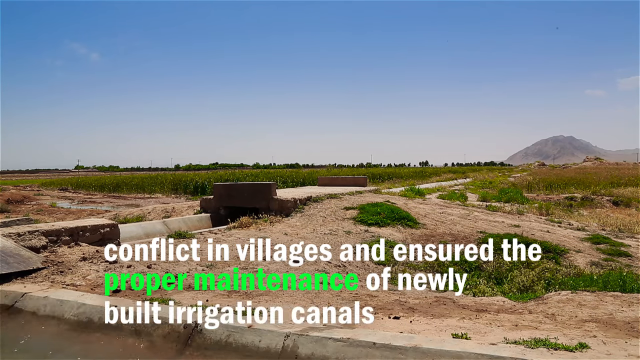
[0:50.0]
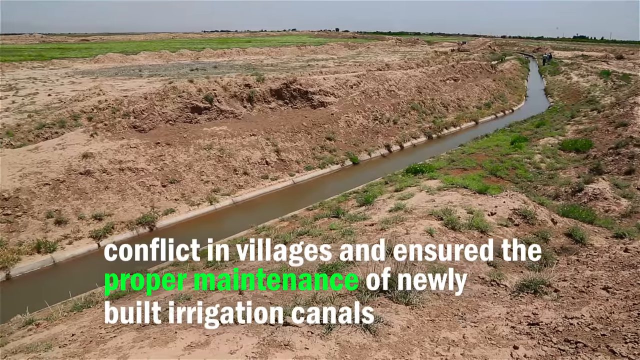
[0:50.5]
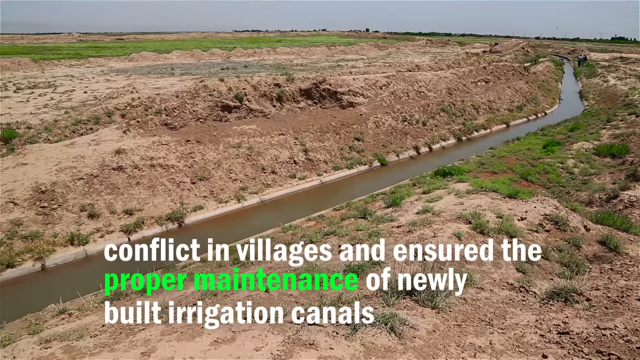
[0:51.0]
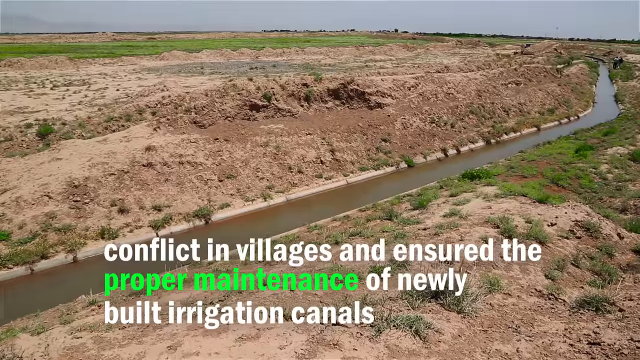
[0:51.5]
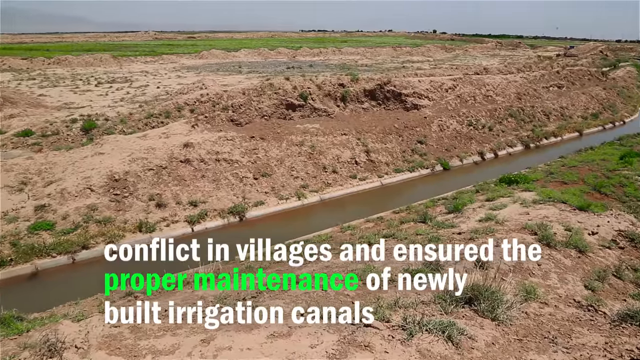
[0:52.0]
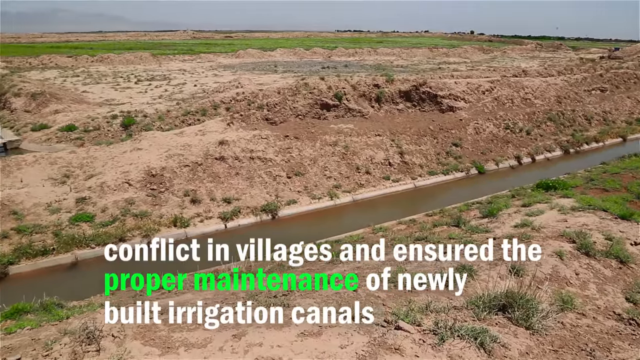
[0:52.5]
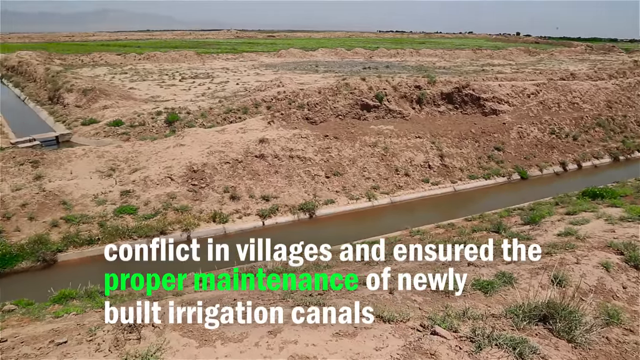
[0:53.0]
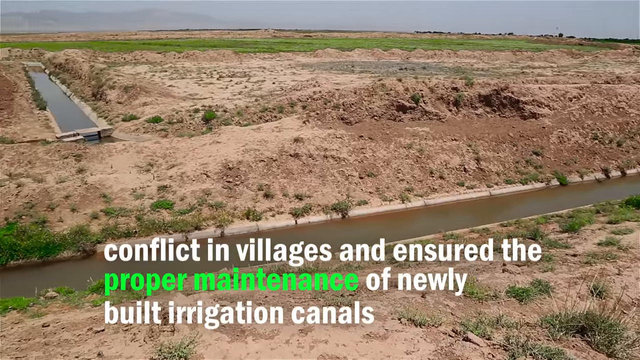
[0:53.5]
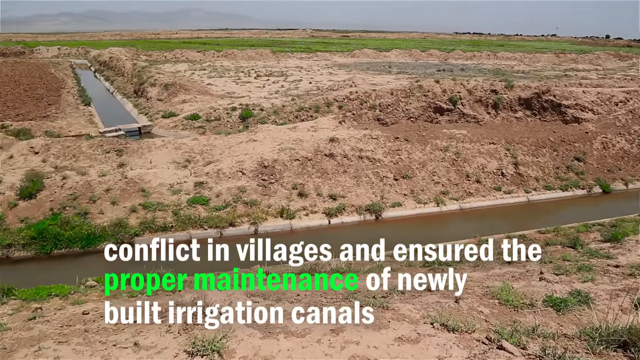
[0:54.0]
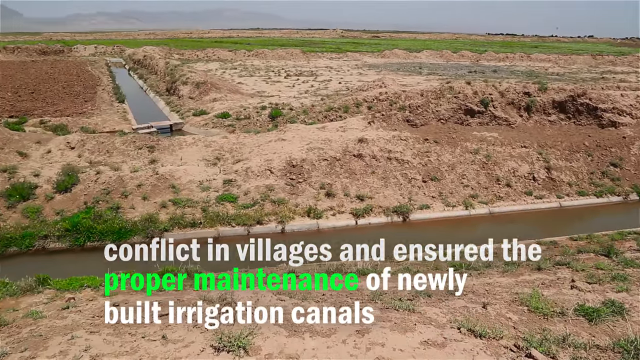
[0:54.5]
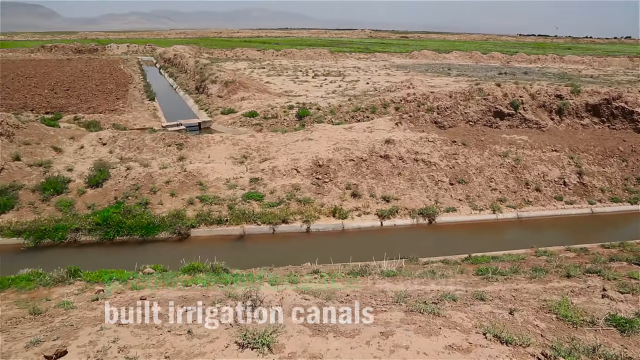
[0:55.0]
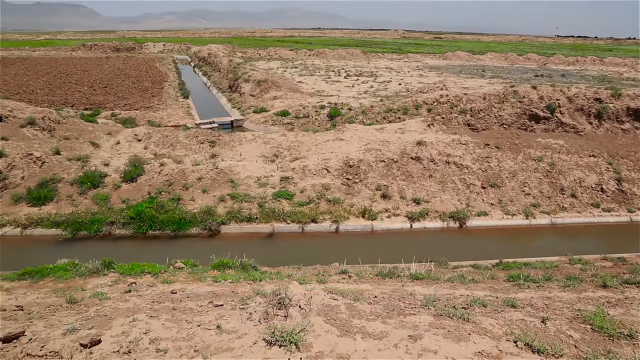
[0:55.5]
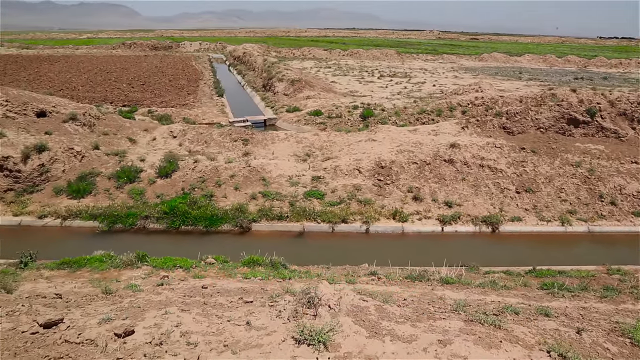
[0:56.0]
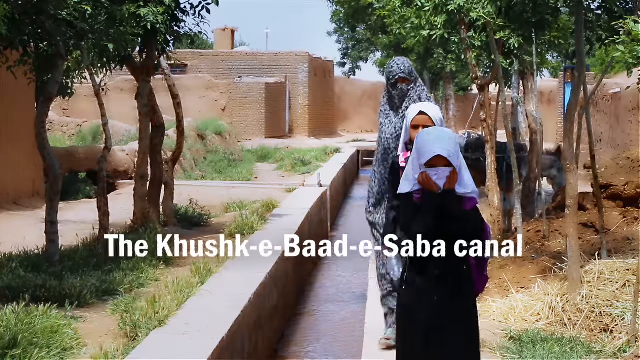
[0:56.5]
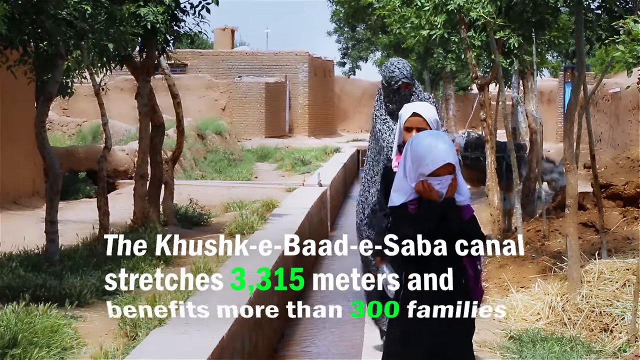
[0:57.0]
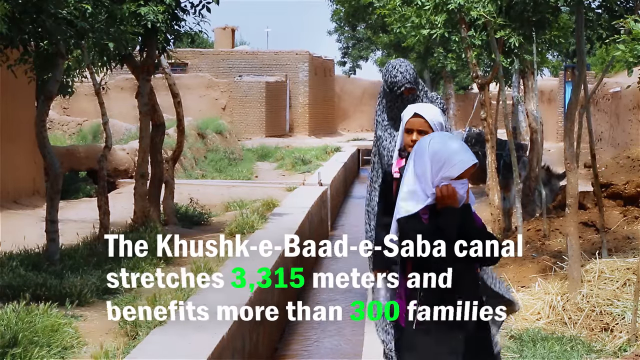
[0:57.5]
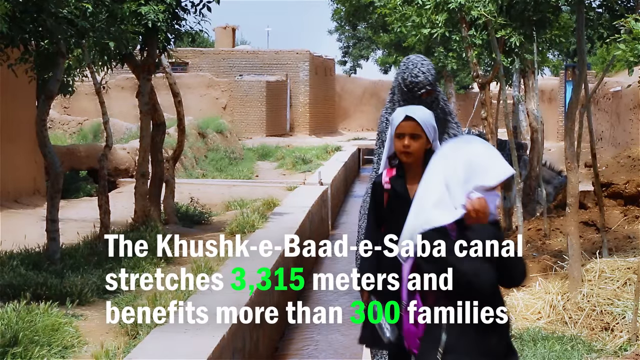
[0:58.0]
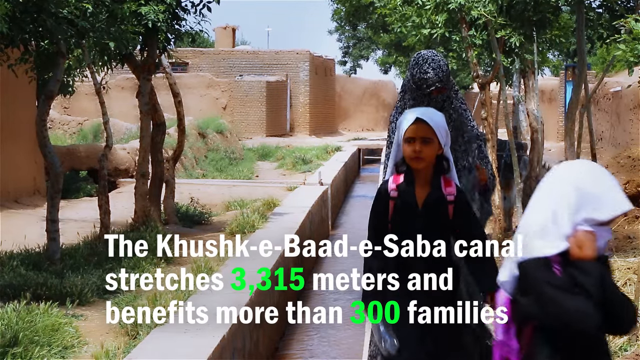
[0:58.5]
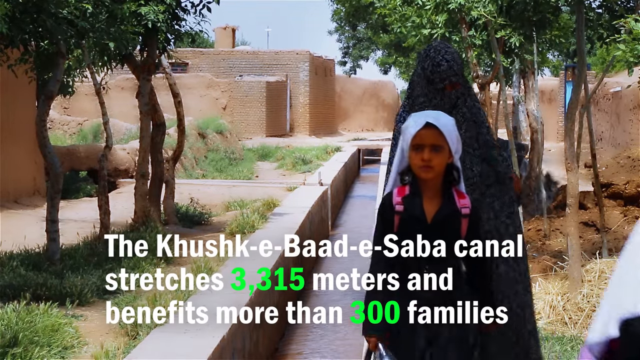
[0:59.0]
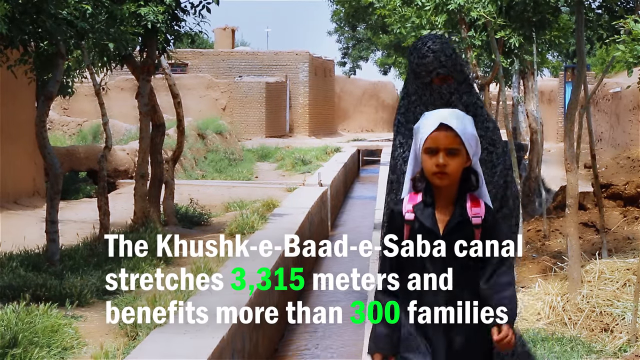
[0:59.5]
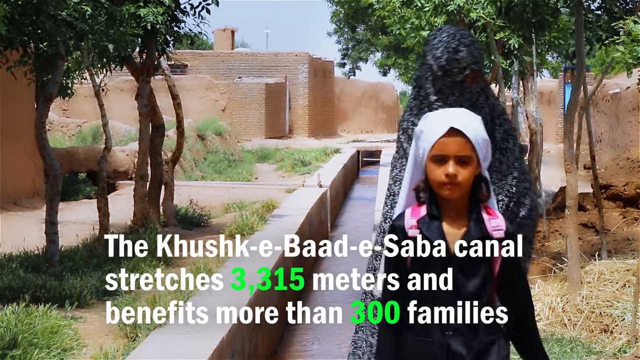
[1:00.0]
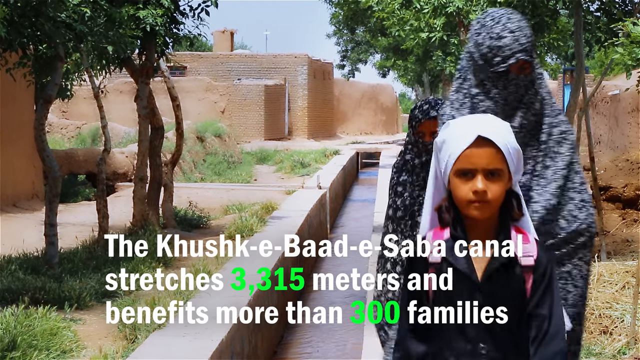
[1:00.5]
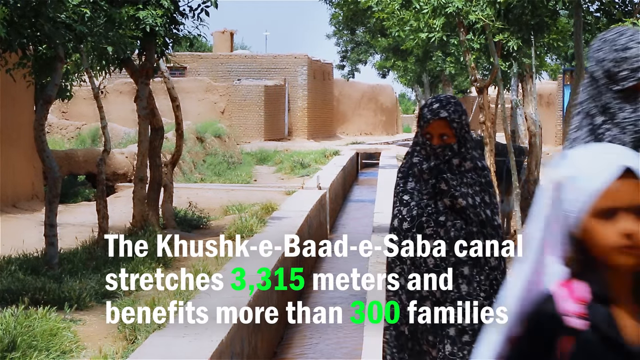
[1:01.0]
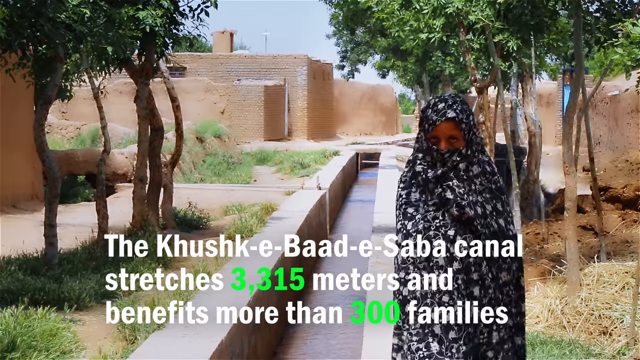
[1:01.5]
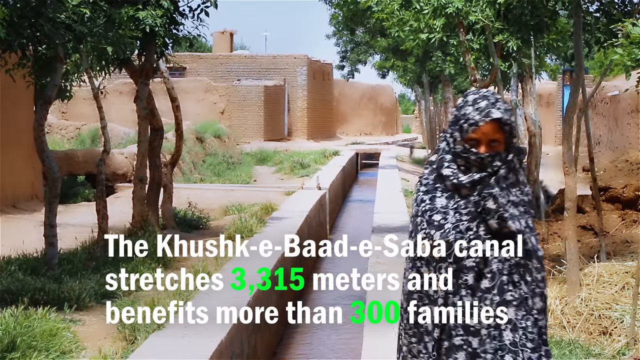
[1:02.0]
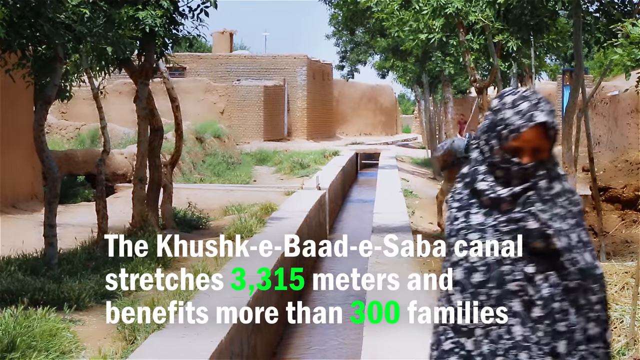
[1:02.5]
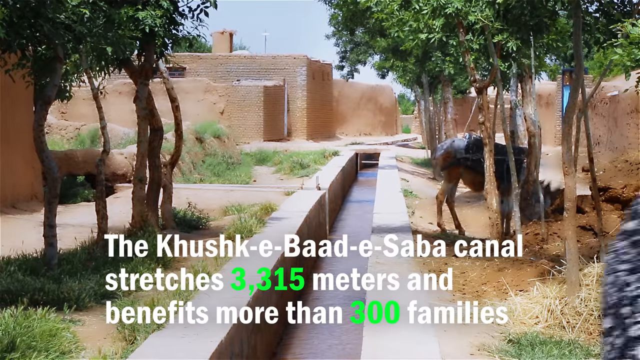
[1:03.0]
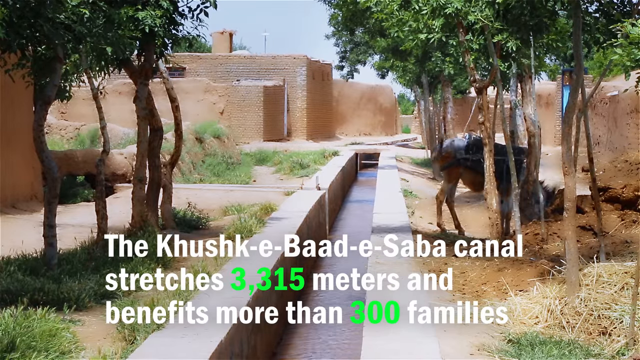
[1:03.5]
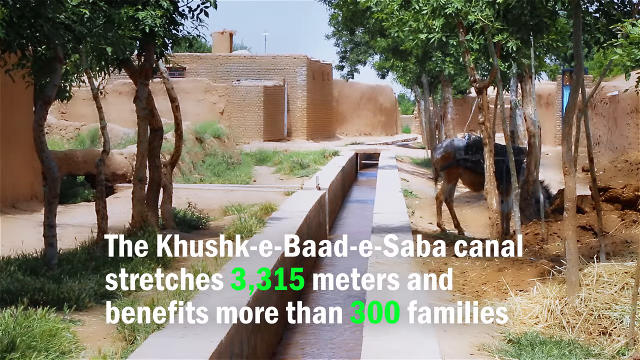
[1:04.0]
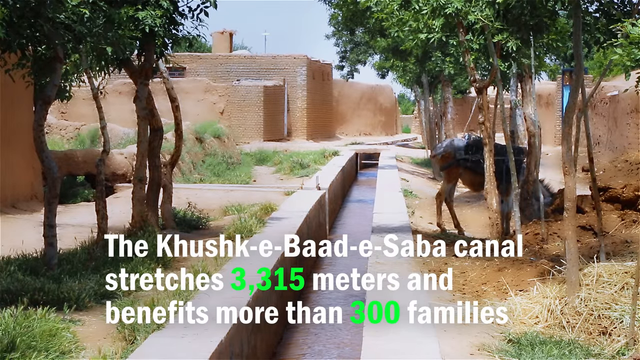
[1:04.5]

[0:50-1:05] The camera pans to the left in a wide-angle shot of the canal, with on-screen text reading "conflict in villages and ensured the proper maintenance of newly built irrigation canals." As the camera pans across the arid landscape and the canal, what looks like another canal or channel of water appears up in the background, while the canal is more in the foreground; the camera pans along, showing the size of the canal. Then what looks like three women appear, covered, wearing headdresses and long robes; apparently two children are in front of a fully covered adult woman, walking in what looks like the area in front of the canal. On-screen text reads "the Kushke-Bad-E-Saba Canal stretches 3,315 meters and benefits more than 300 families."